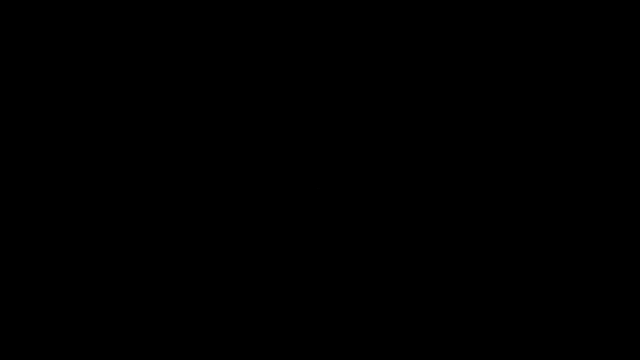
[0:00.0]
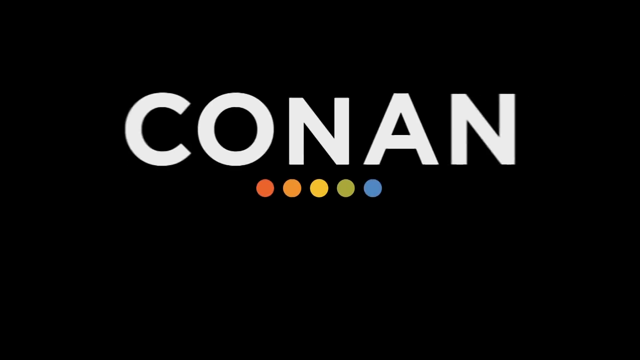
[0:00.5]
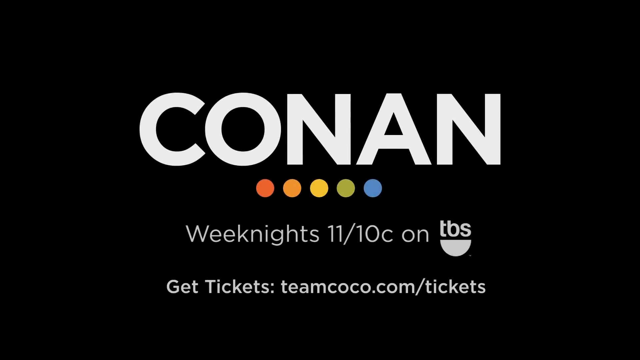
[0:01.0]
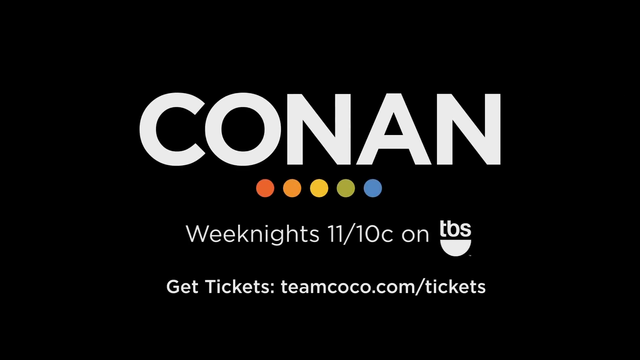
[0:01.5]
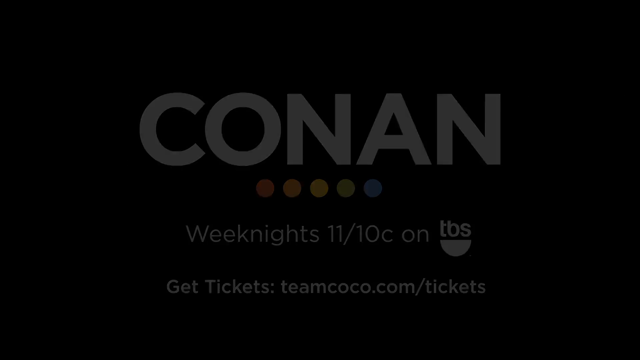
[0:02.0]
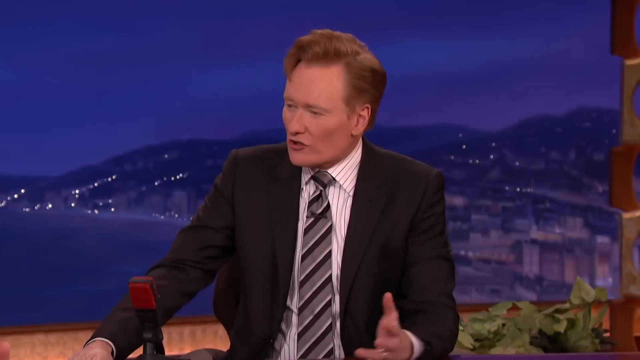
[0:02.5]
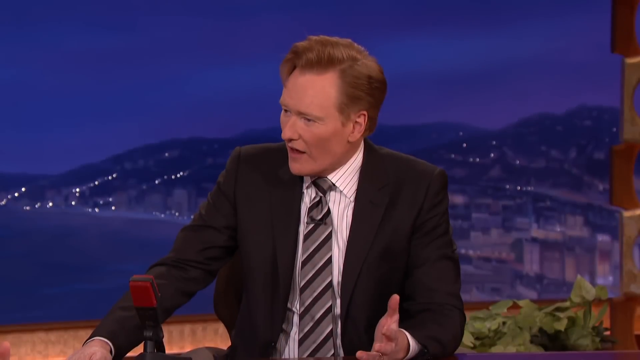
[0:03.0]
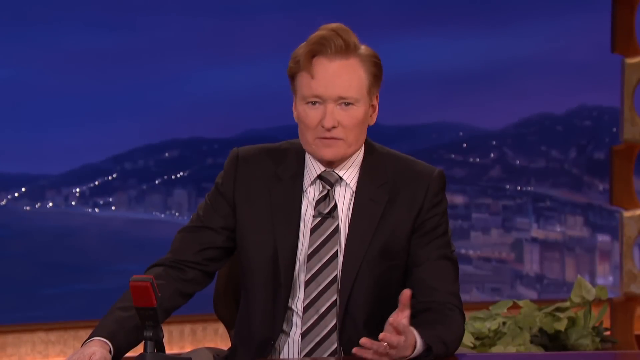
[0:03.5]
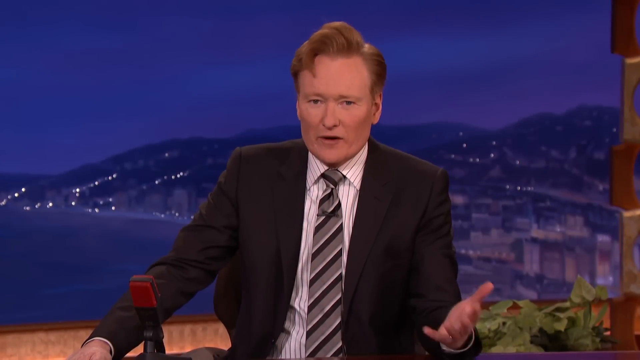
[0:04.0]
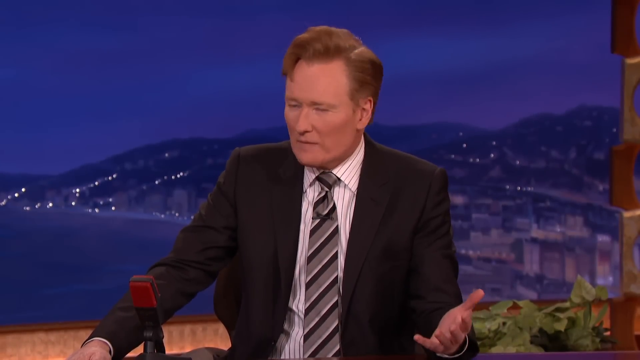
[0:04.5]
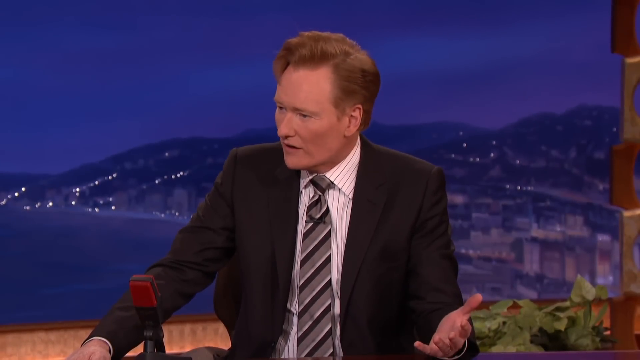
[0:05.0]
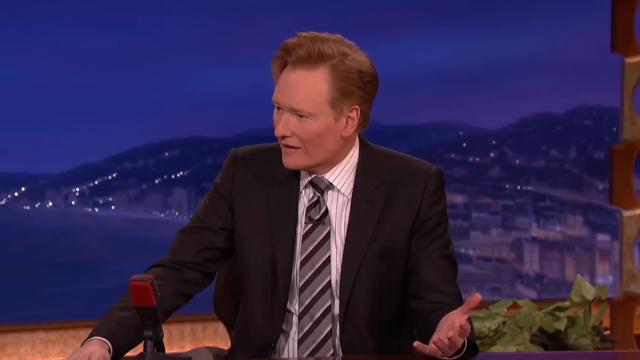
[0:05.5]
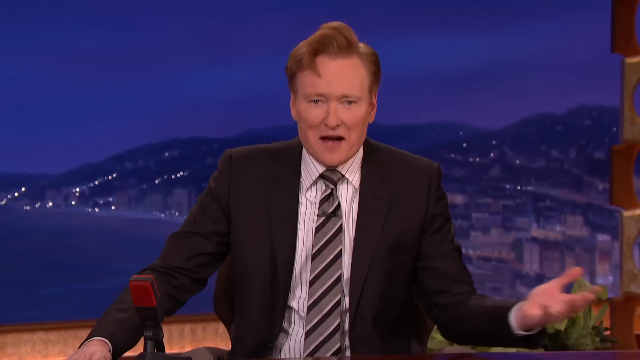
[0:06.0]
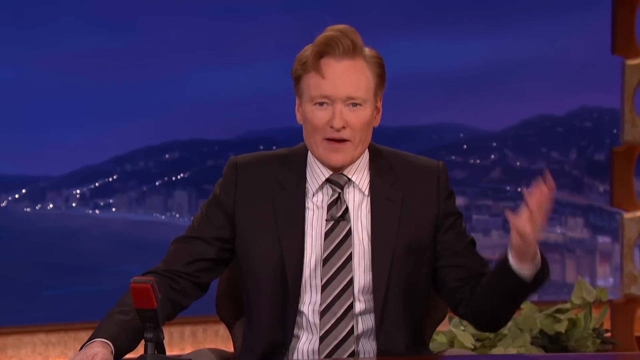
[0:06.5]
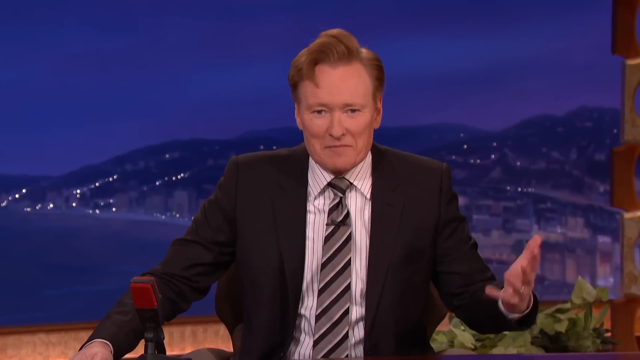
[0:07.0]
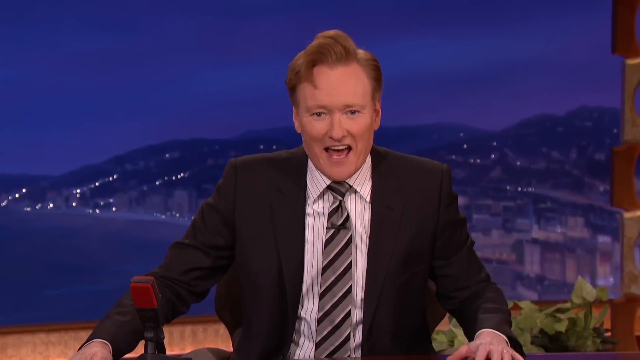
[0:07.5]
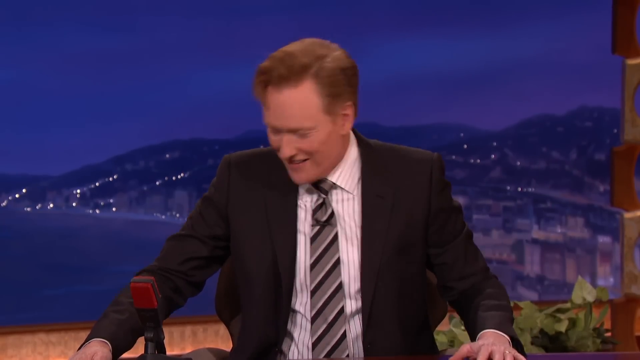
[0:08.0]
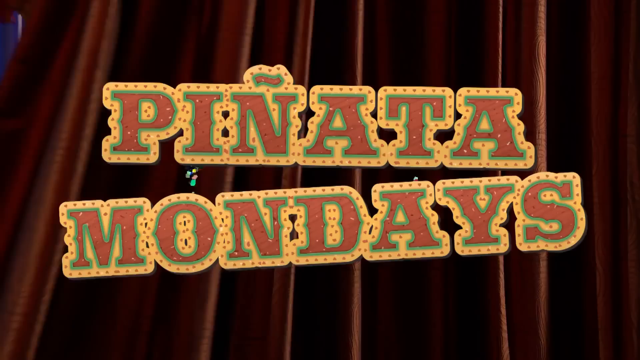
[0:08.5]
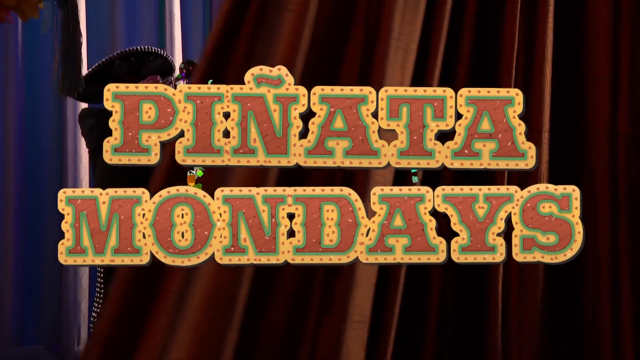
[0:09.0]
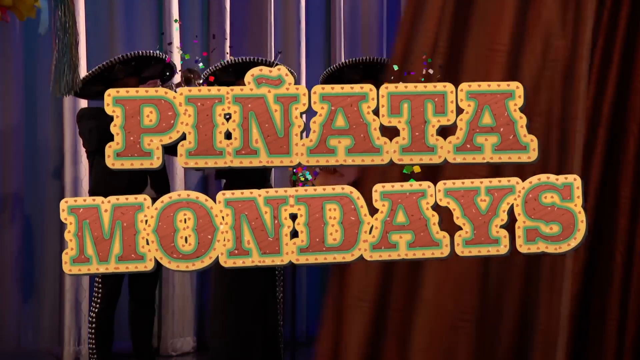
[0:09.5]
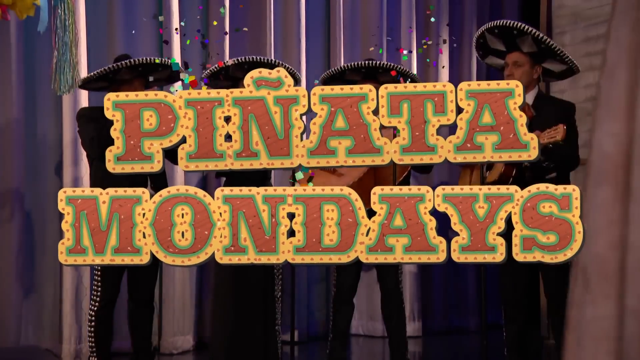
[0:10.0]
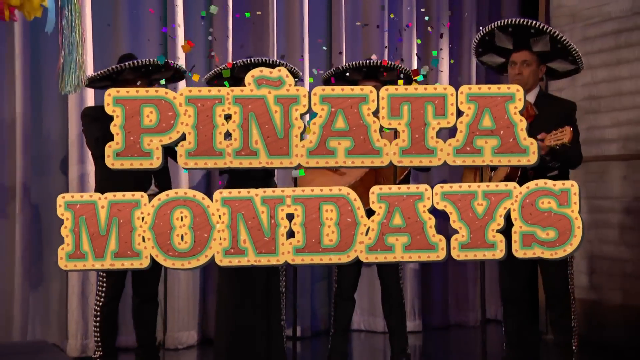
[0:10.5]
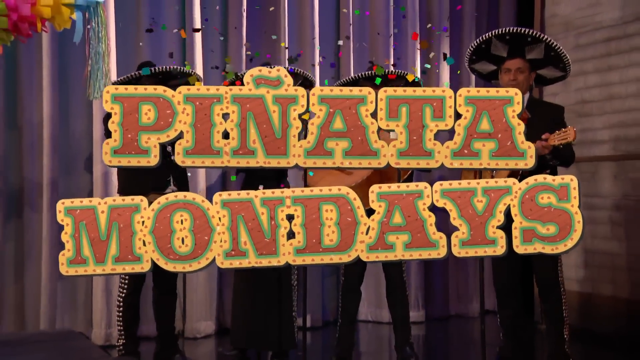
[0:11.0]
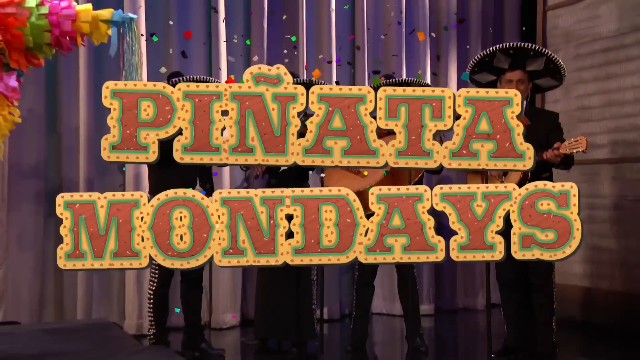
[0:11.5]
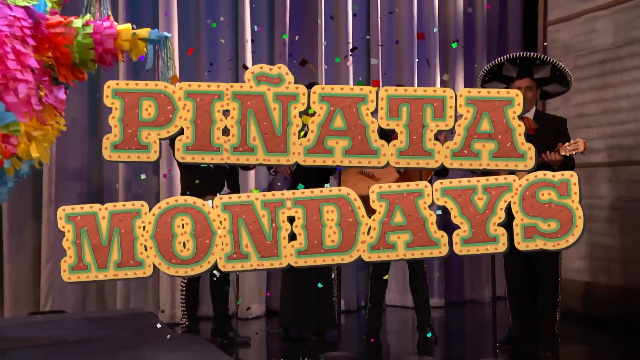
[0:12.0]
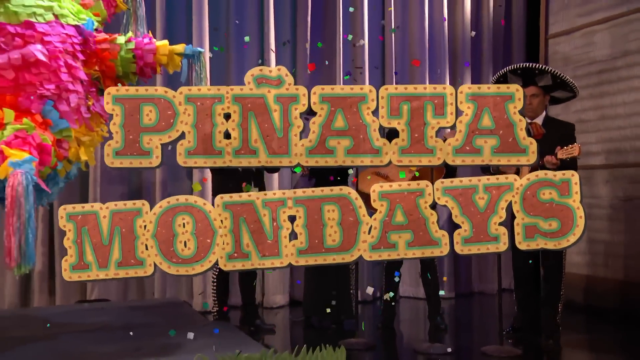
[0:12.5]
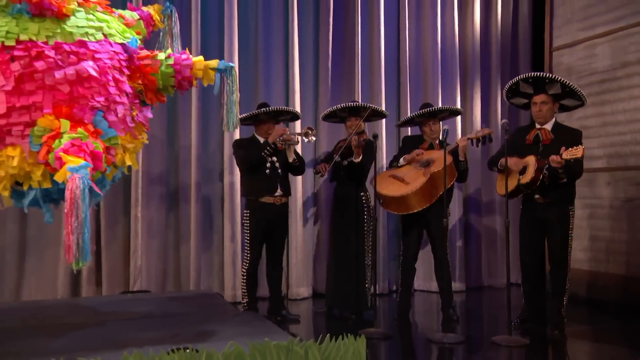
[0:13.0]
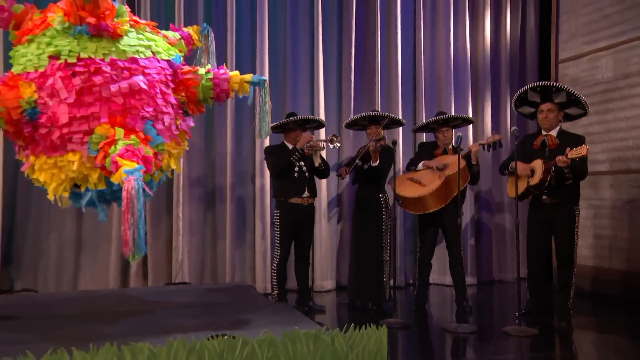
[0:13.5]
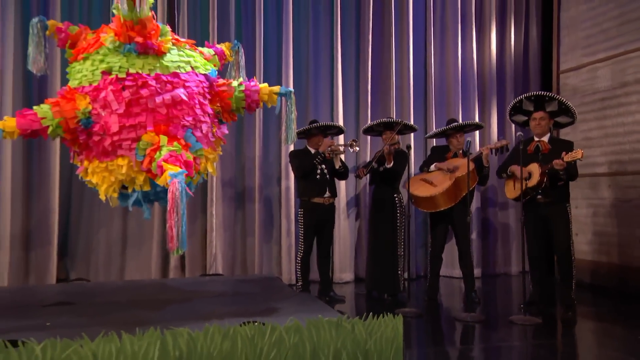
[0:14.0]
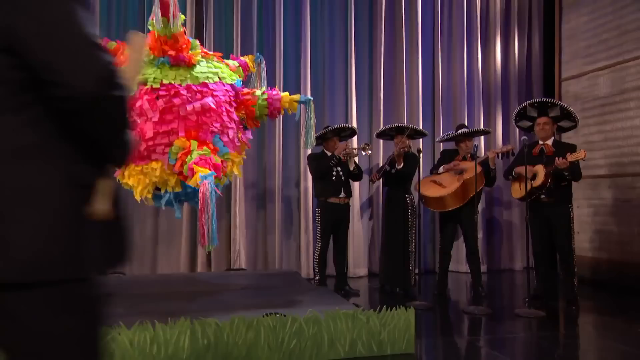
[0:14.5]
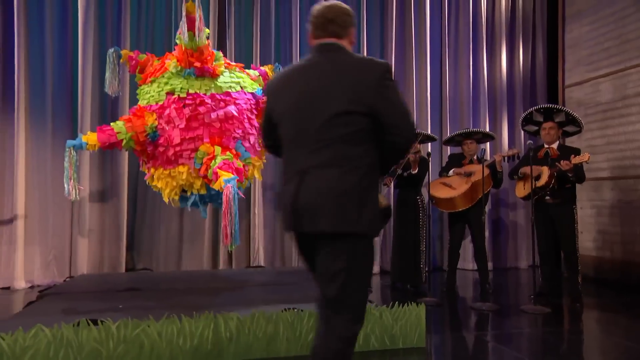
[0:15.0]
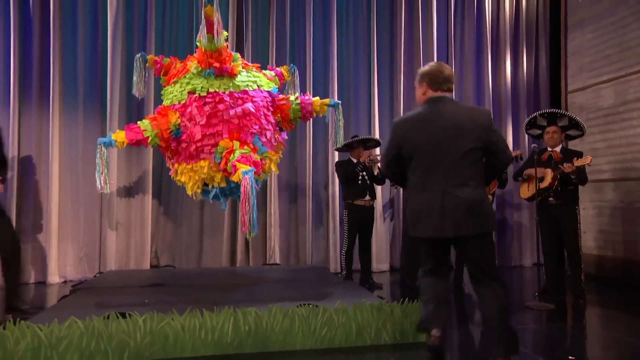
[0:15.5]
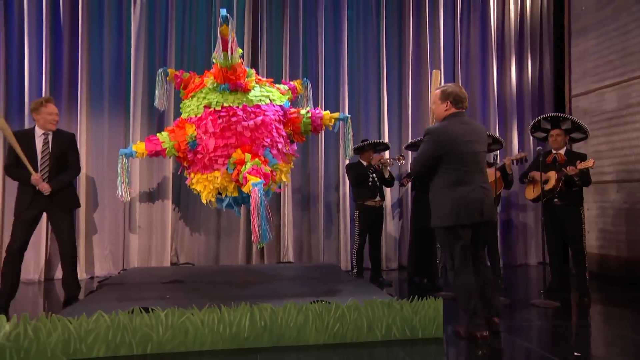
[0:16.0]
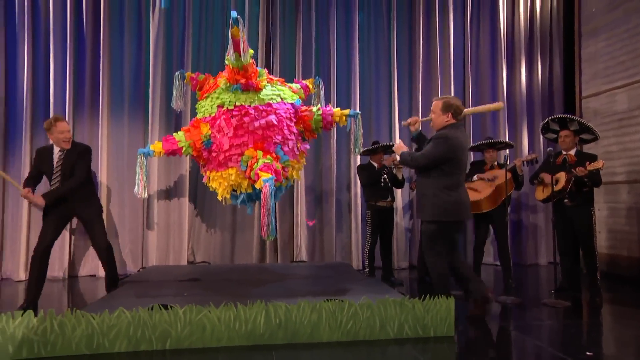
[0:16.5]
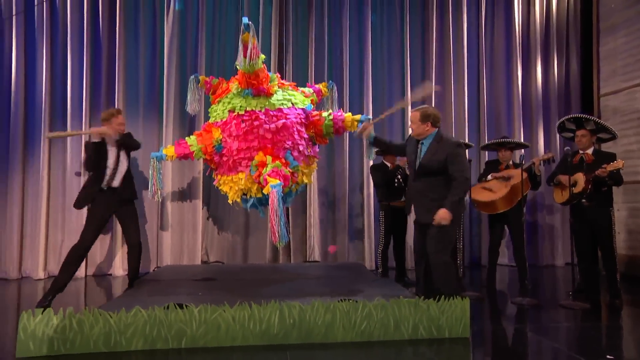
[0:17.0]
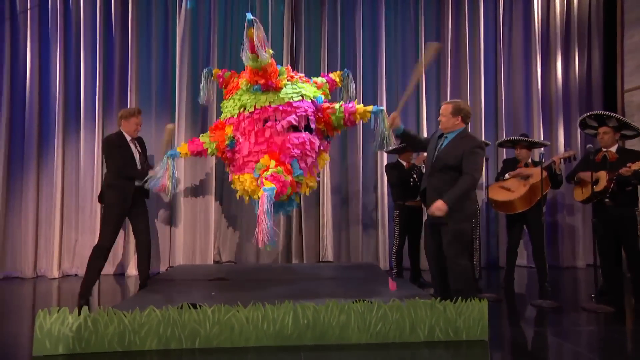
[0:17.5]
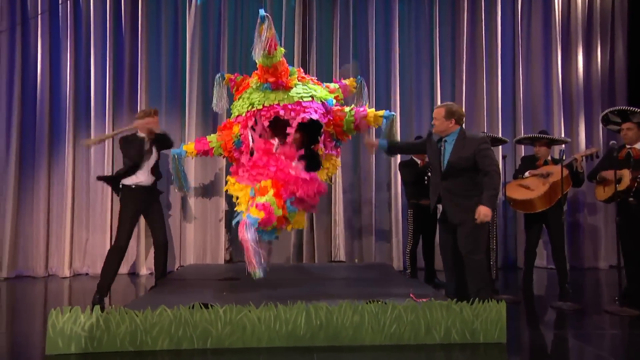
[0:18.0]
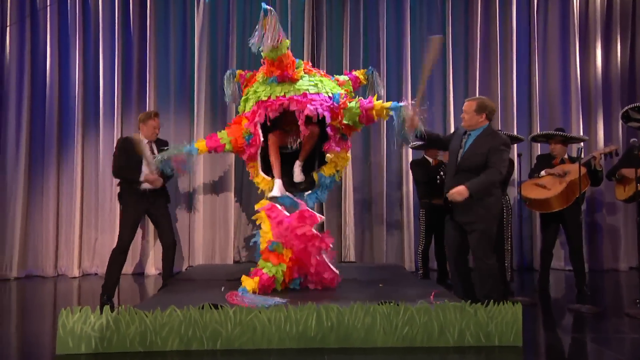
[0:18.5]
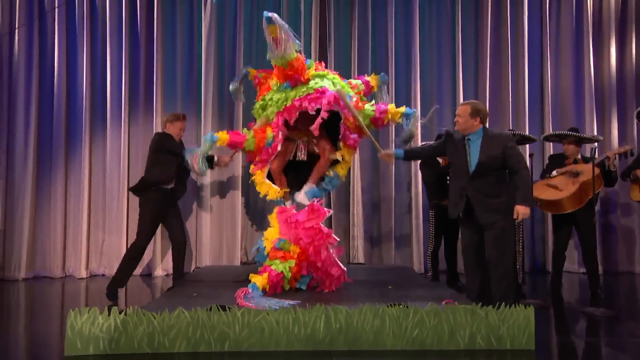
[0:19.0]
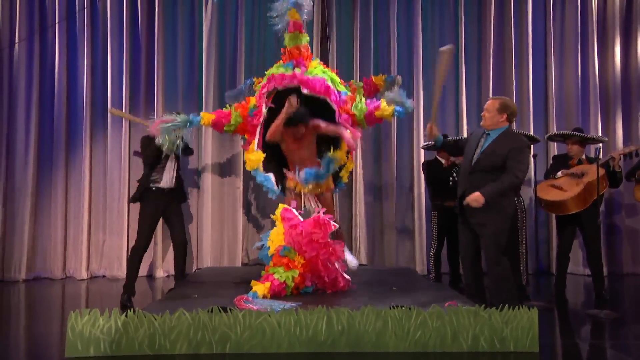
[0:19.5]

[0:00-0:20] The video begins with an opening screen for the show "Conan": the name "Conan" appears in large white capital letters on a black background, with five small colorful dotted circles highlighting the name. Following that, more white text reads "Weeknight 11/10 C on TVS". Next, Conan, the host of the show, appears wearing a black jacket over a white striped shirt with a gray, black and white diagonally striped tie. The backdrop behind him shows a landscape at night with some dotted lights on it. Conan is talking and looks excited as he waves his hand. Then a colorful intro in red, yellow and blue appears that says "Piñata Mondays", and in the background of the intro four men dressed in Mexican outfits are visible.